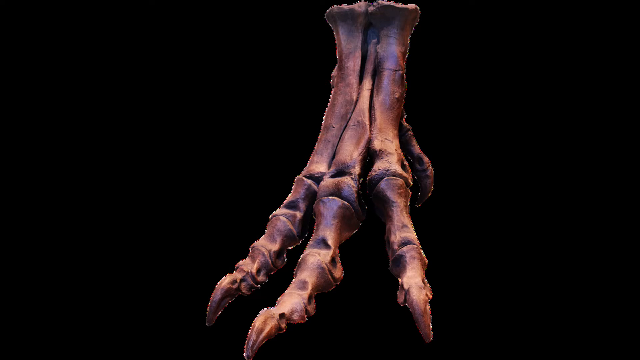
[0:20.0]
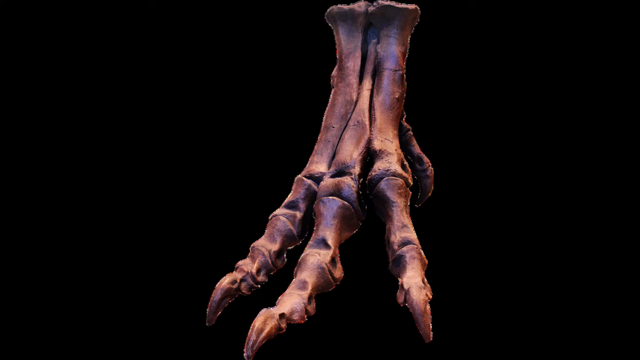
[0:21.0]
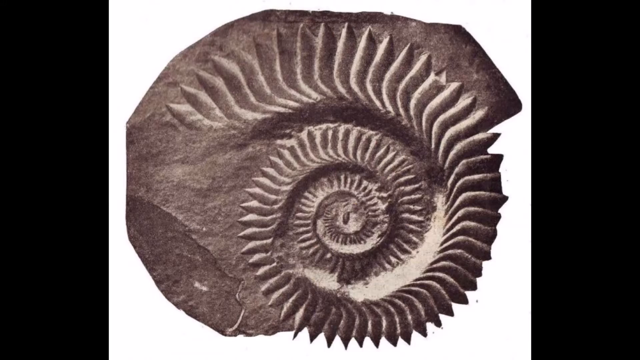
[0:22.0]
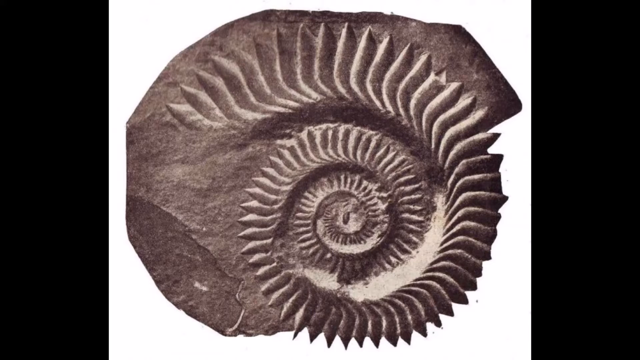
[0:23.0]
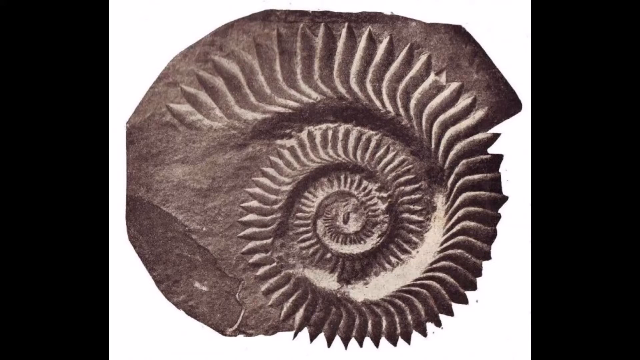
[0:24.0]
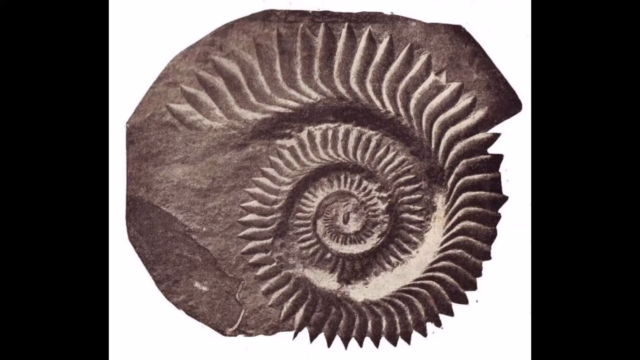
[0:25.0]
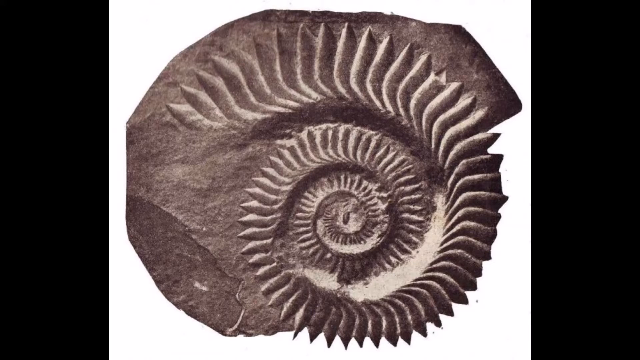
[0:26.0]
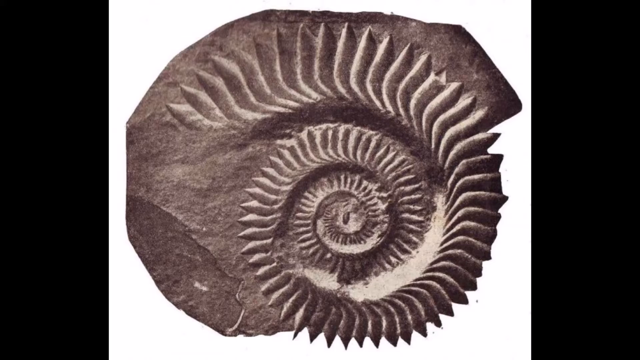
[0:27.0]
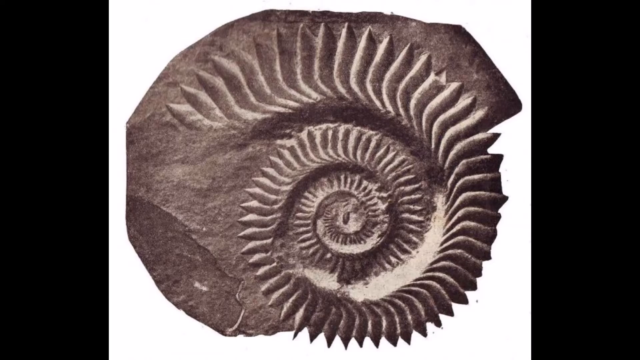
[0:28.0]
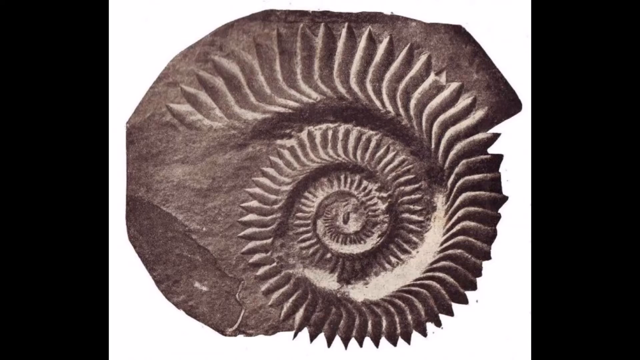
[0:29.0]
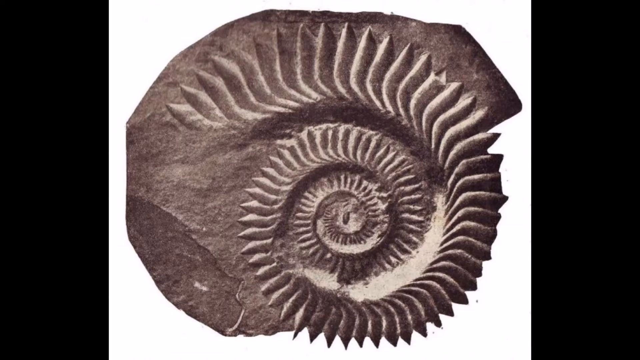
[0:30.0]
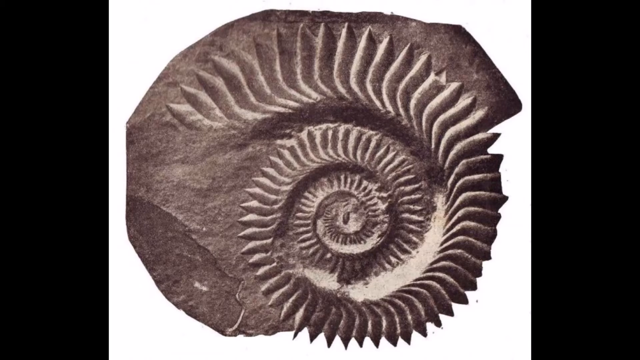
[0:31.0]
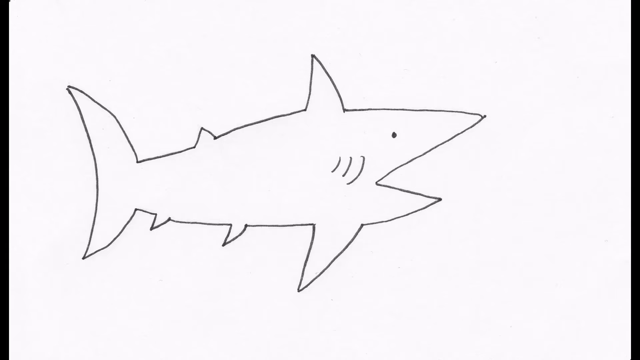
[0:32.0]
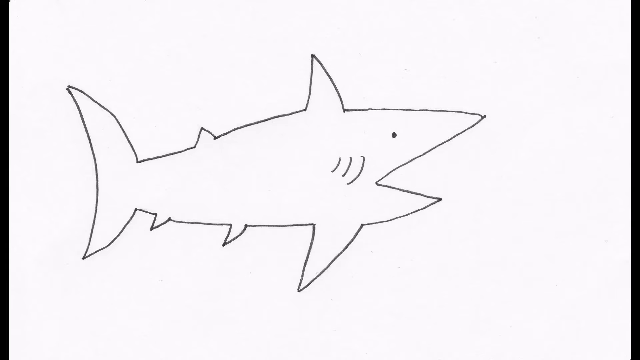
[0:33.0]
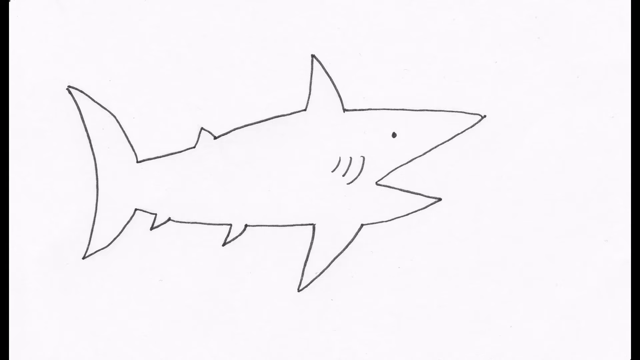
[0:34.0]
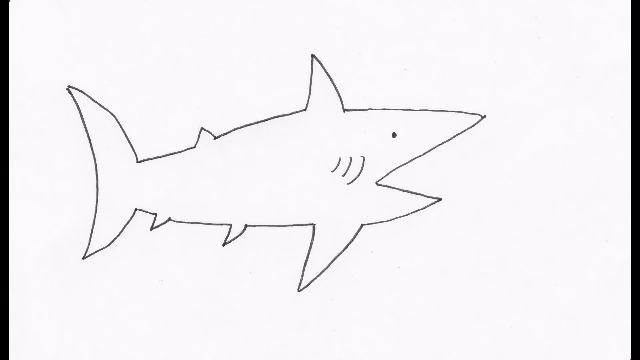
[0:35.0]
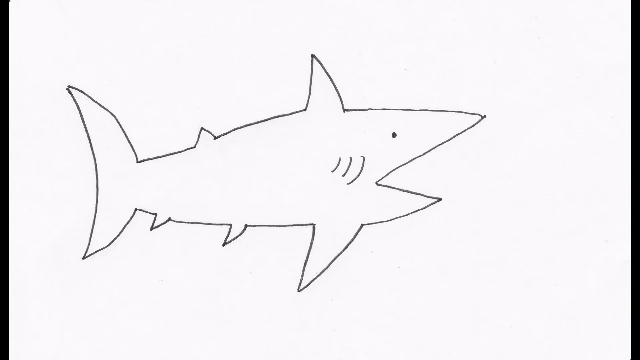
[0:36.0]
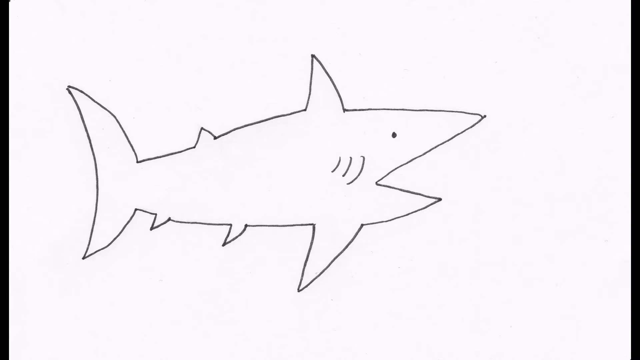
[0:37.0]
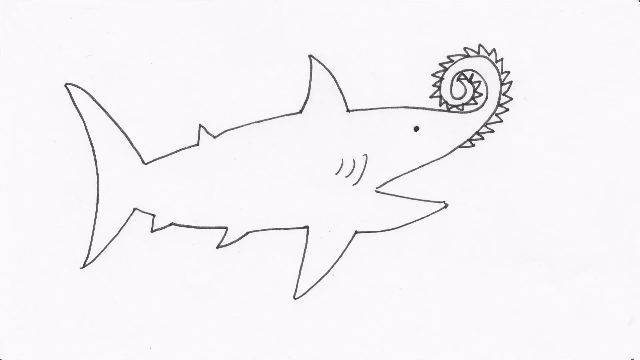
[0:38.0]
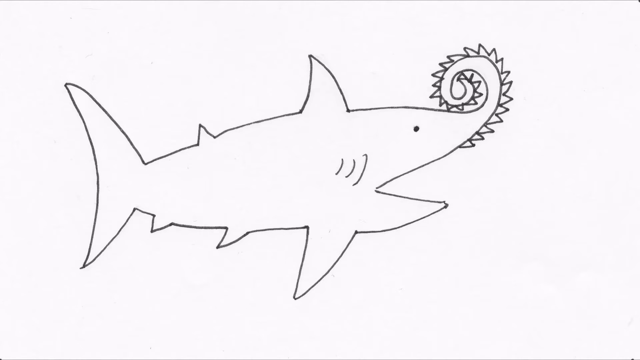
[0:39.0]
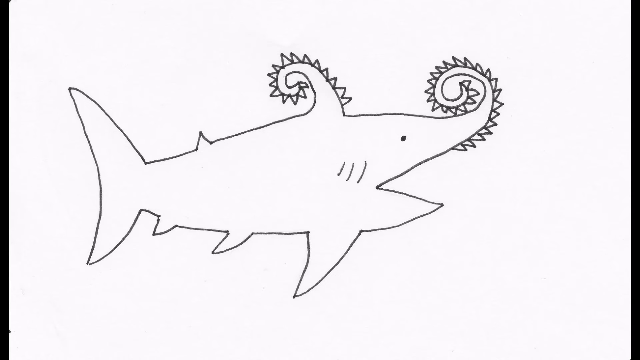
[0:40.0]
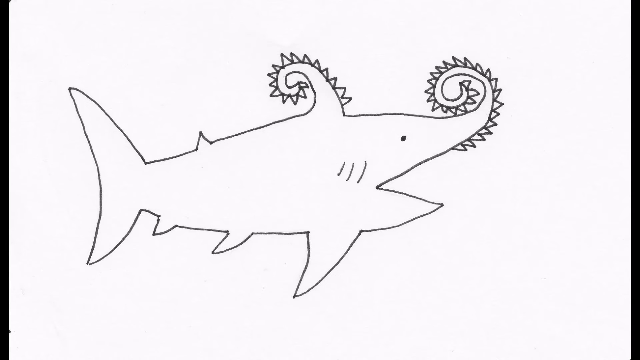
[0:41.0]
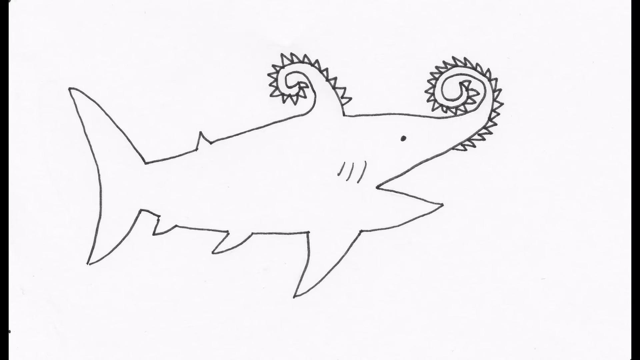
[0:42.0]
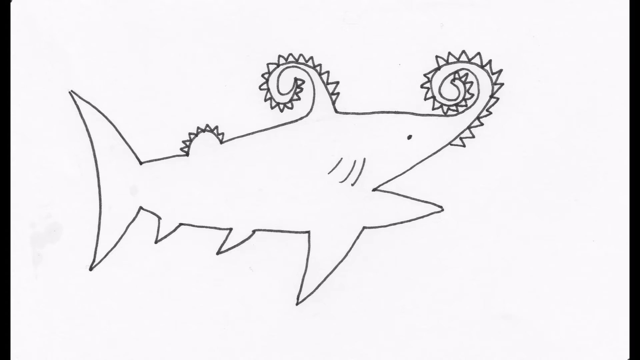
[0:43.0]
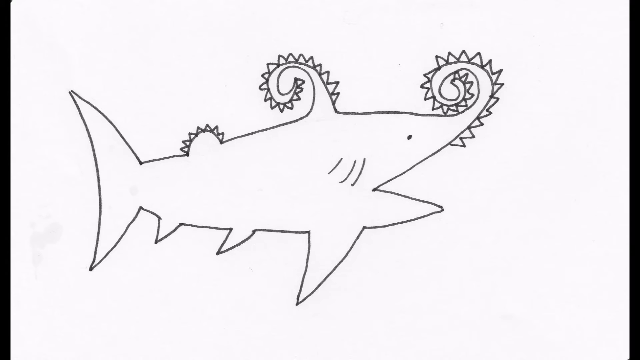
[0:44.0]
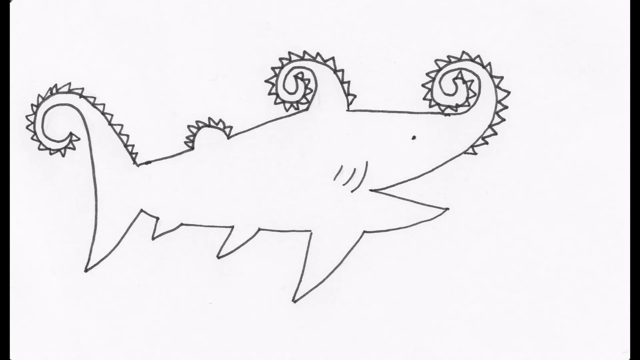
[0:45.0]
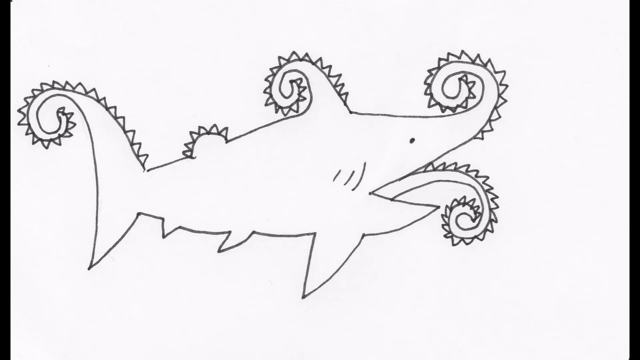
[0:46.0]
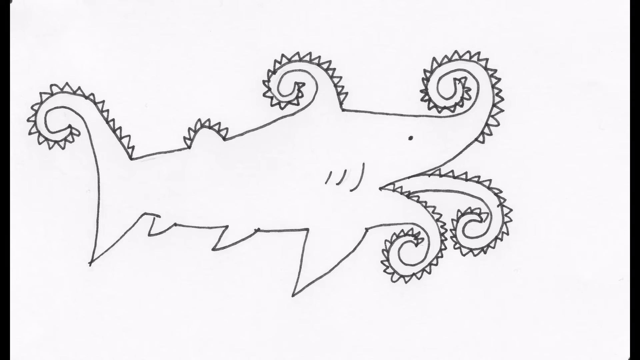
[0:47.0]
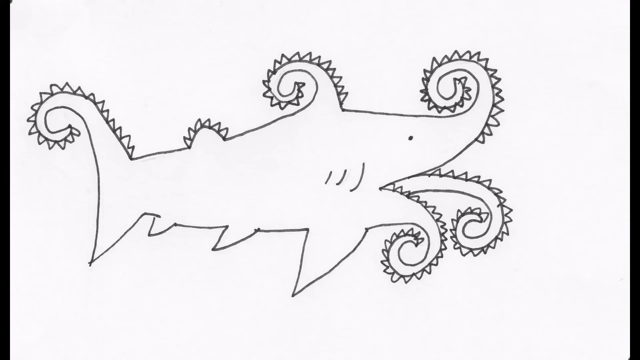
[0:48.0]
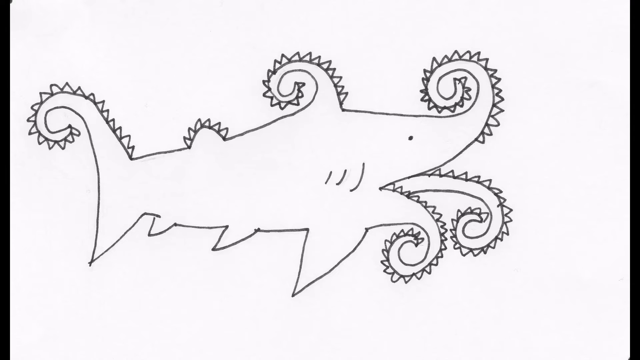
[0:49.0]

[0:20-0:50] An object that looks like some type of fish or a clam shell appears, with little lines that go around in a circular pattern; a little sand seems stuck in the grooves. Then a drawing of a shark appears again, this time all white, shown as an outline, with the eye and lines for breathing visible. The shark kind of morphs into an octopus: the nose gets longer and curls up into what looks like a tentacle, and more tentacles keep forming until an octopus is shown. A red X is drawn over the octopus. Next the video goes back to the brown fossil that is a hand or leg, with three finger-like parts, on a black background. It looks like the fossil of some type of animal.